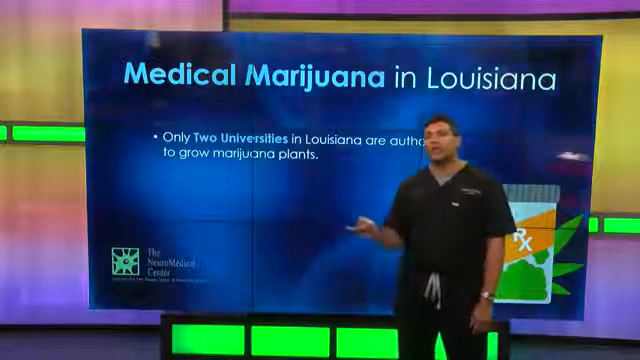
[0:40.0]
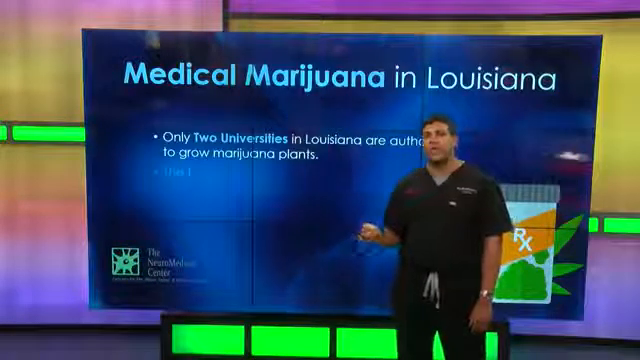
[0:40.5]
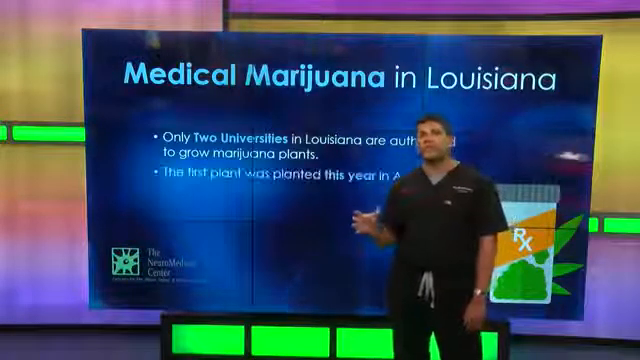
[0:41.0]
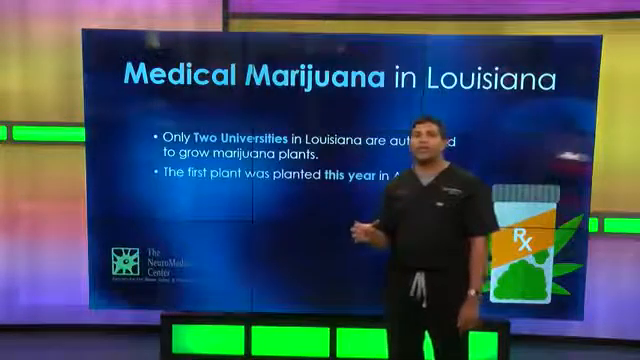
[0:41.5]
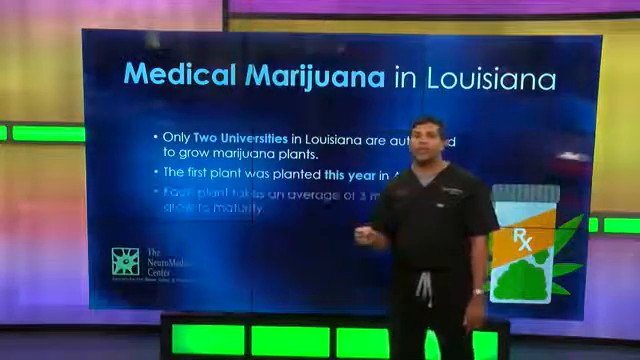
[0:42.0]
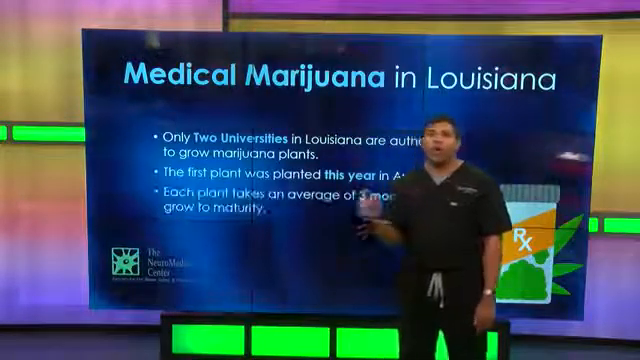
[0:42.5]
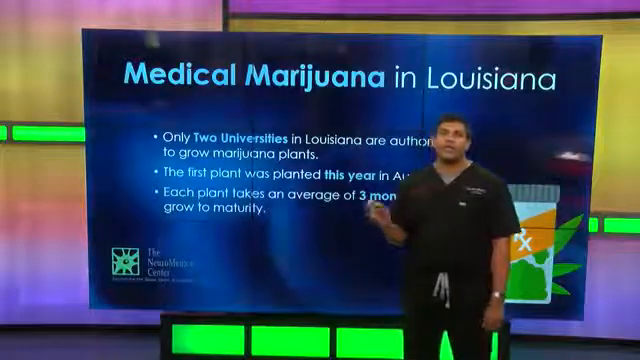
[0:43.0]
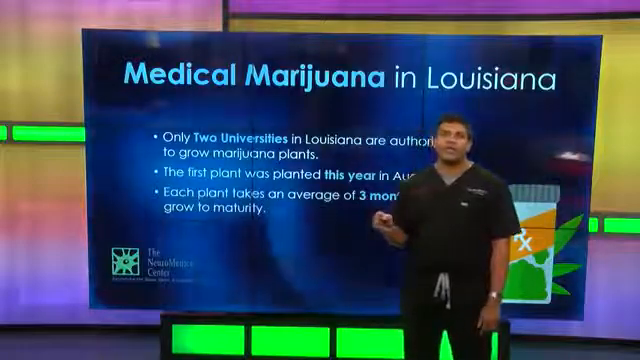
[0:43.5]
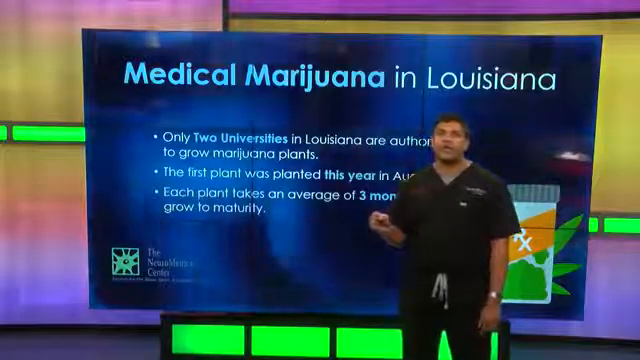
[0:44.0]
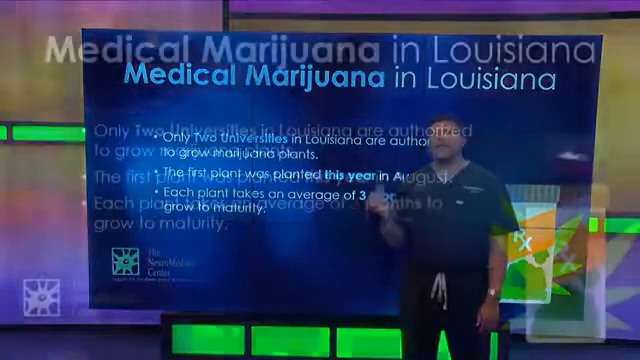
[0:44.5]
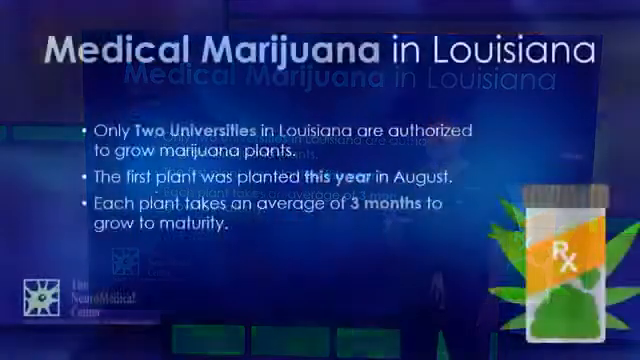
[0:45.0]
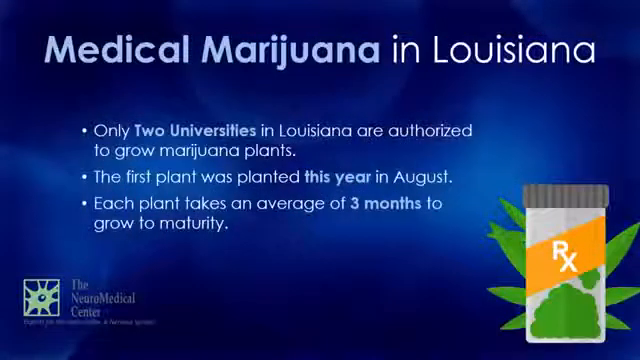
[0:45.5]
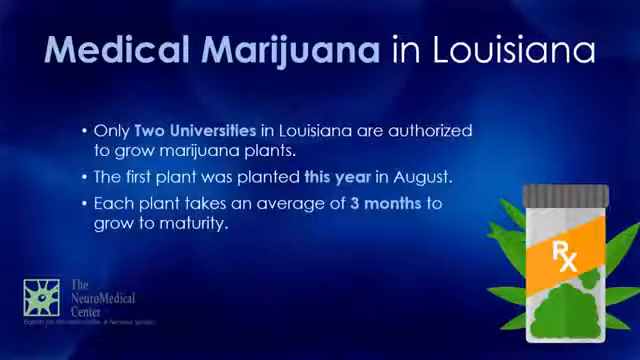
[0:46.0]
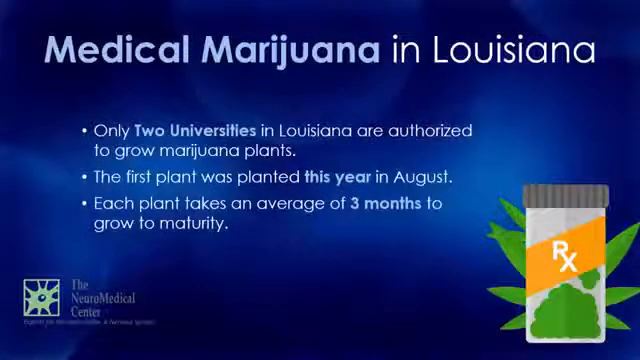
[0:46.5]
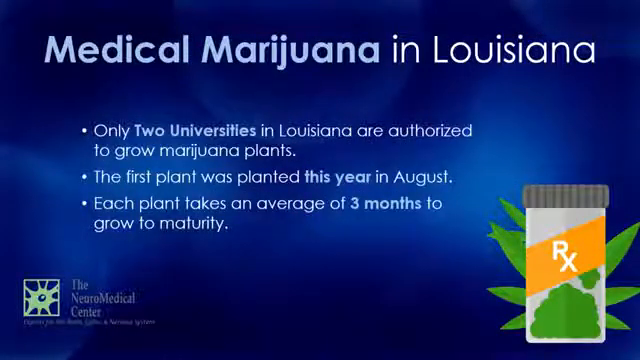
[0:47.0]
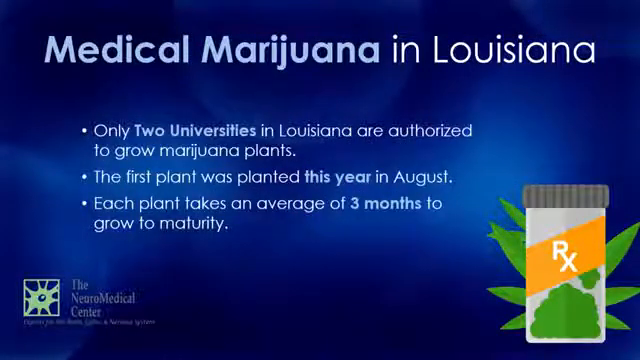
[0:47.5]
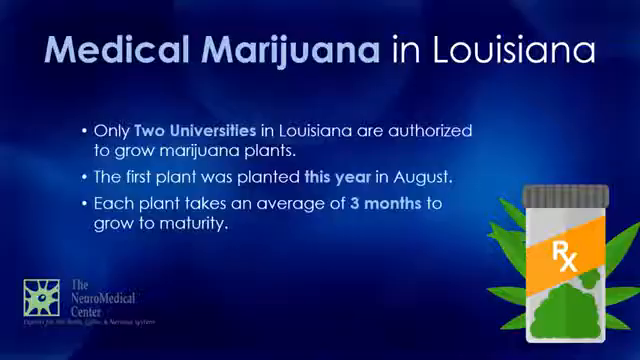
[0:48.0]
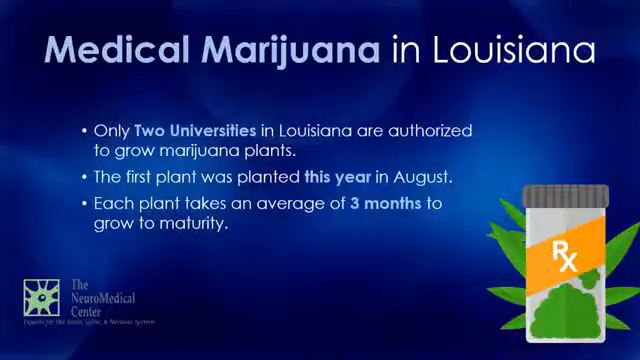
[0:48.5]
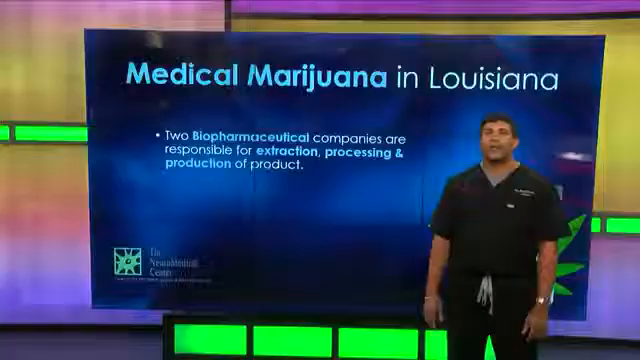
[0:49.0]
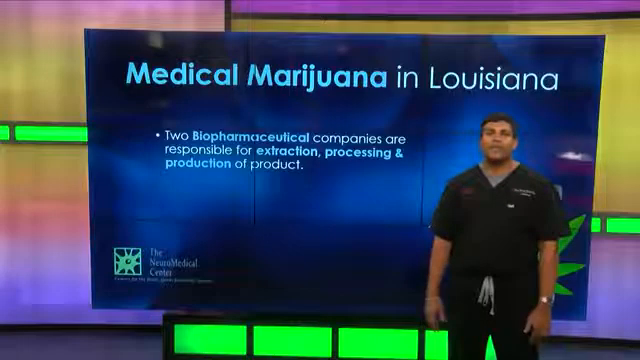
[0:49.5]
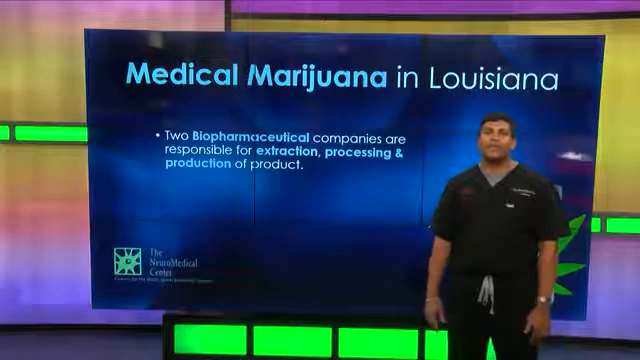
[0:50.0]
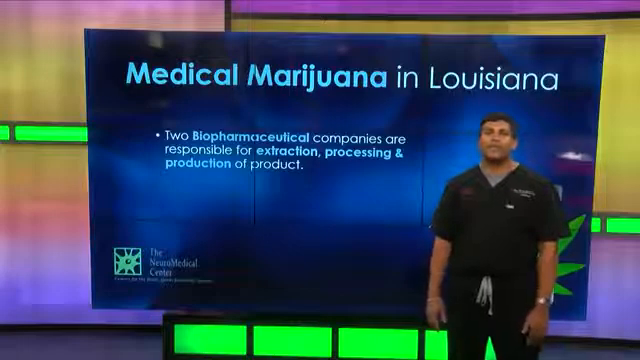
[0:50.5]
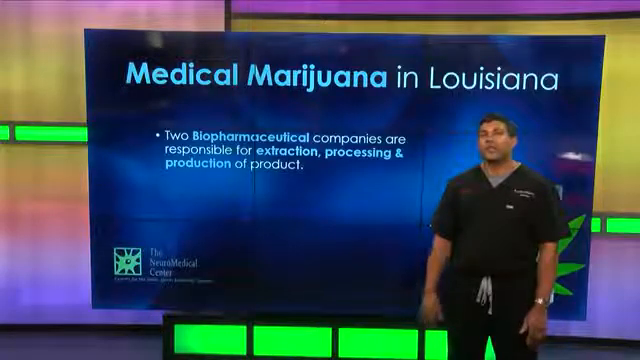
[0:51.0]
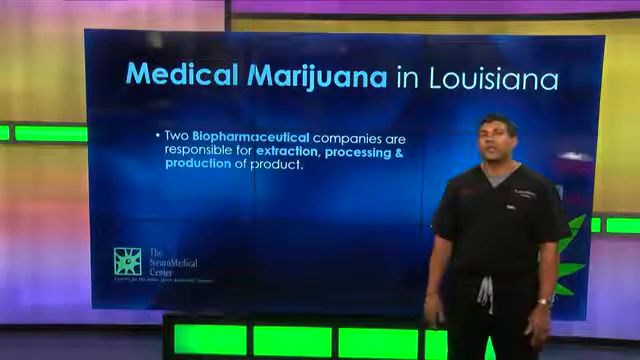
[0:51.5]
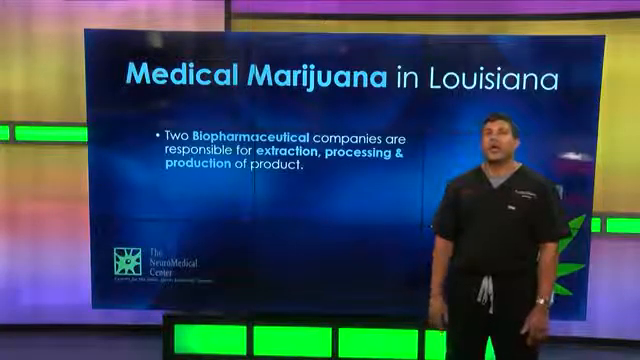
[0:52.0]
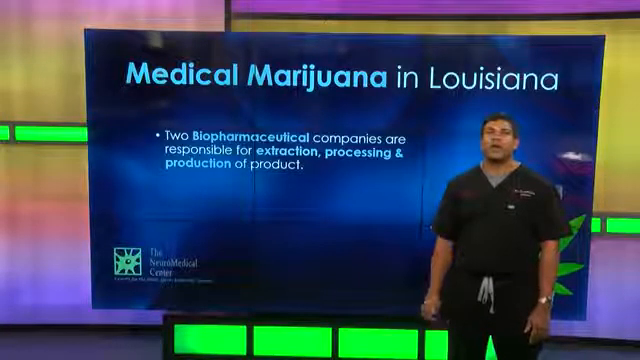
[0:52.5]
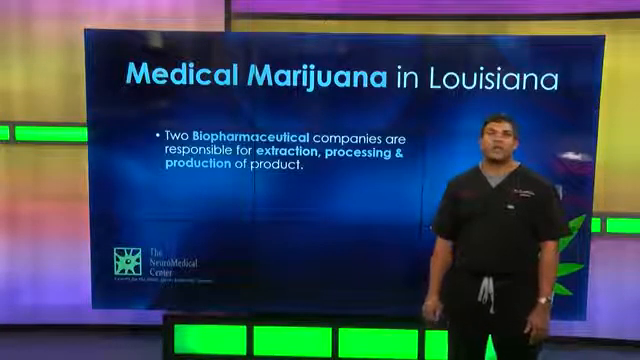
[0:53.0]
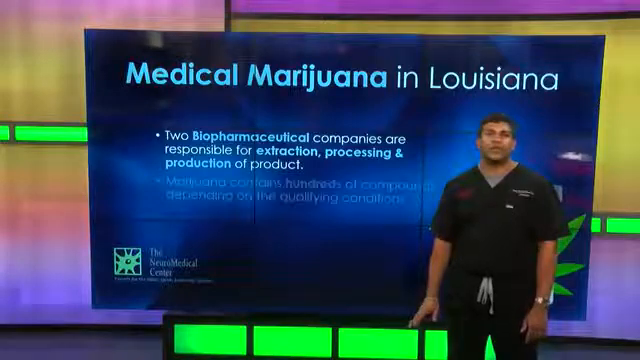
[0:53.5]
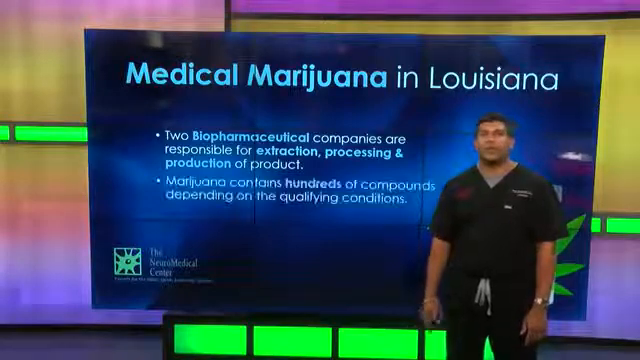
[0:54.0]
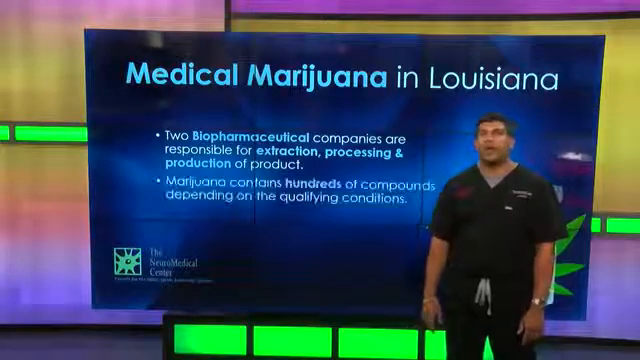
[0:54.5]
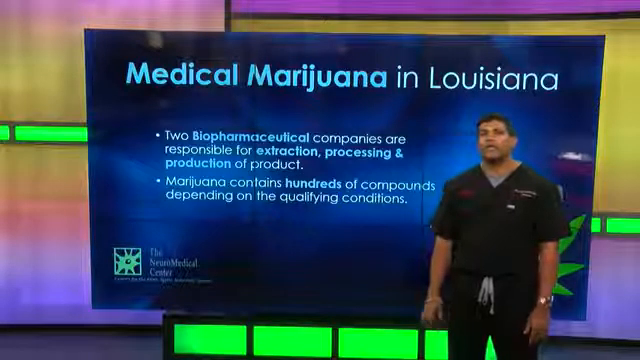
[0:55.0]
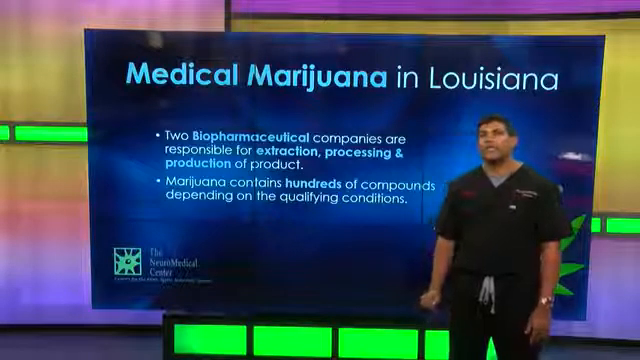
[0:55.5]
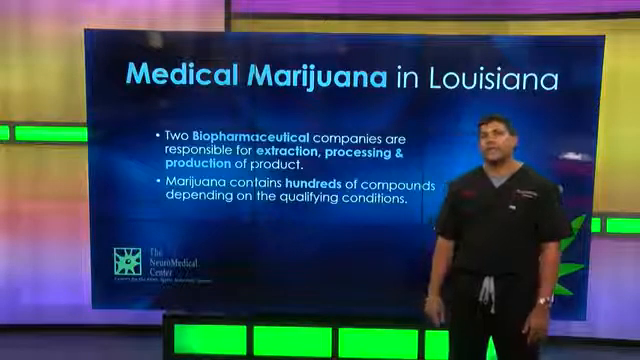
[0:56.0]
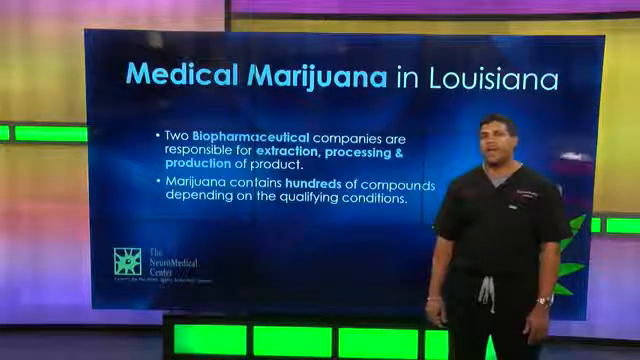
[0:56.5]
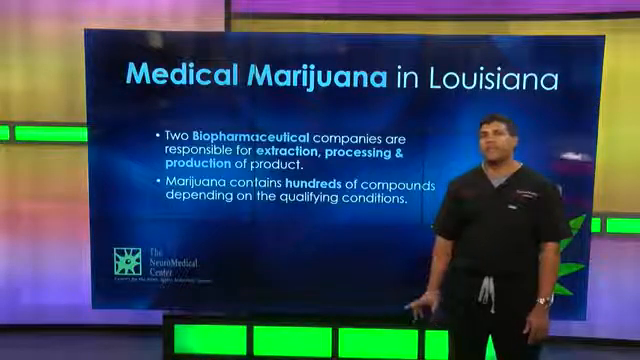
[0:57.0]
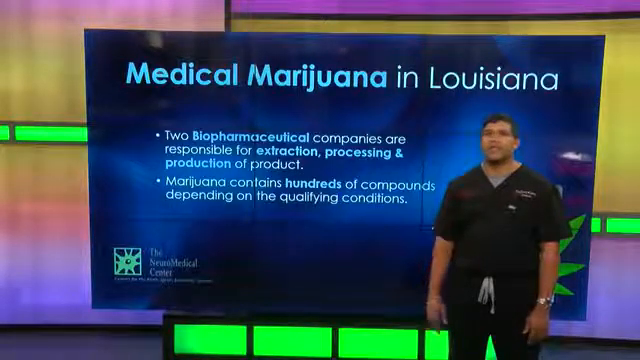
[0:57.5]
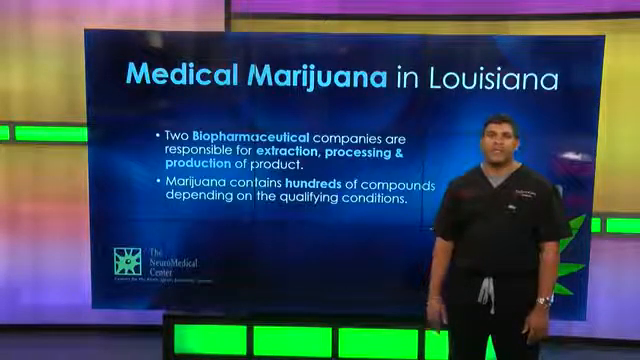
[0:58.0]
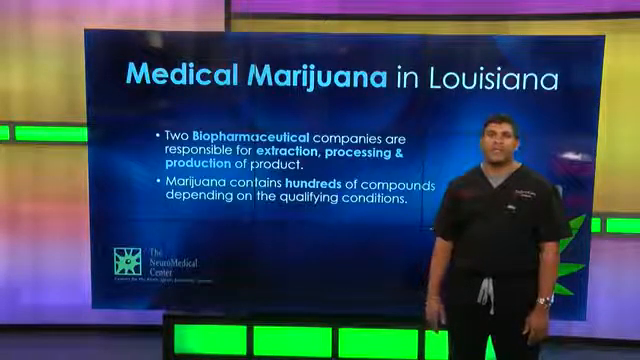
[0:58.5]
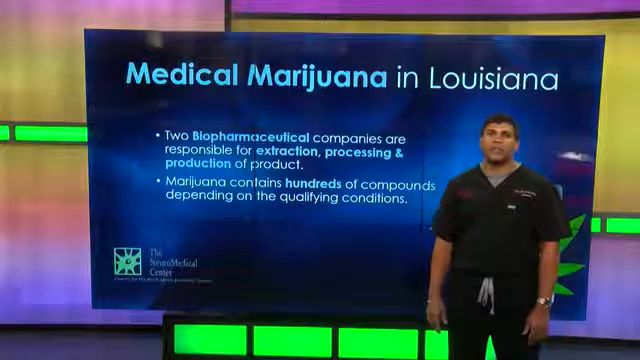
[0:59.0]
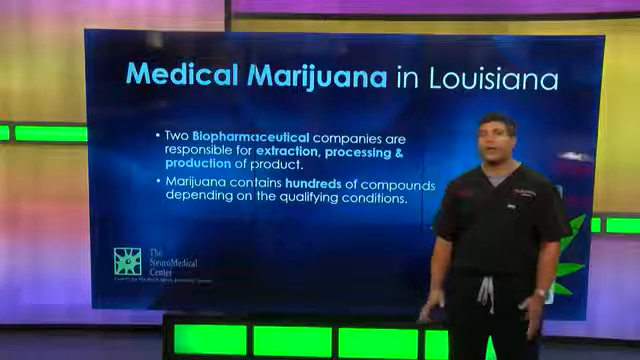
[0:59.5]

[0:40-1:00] The newsroom has two very colorful backgrounds. The one at the very back has purple, lavender, pale green and neon green; the one in front is steel blue and baby blue, with text and bulleted text on it. The large text reads "medical marijuana in Louisiana," and the bullet points are about medical marijuana. A medical doctor in front of the screens wears black scrubs and a wristwatch on his left wrist, and emphasizes his points with his right hand. There is text on the chest of his scrubs: red on its right side and white on its left side. His hair is cut short. The video transitions to the steel blue screen with light blue in it, showing the text "medical marijuana in Louisiana" with three bullet points and text about medical marijuana plants. In the bottom right corner is an image of a pill bottle with the RX symbol on it and marijuana leaves behind it; at the bottom left is an icon for the Neuro-Medical Center. The video then returns to the newsroom, where the doctor continues to talk.